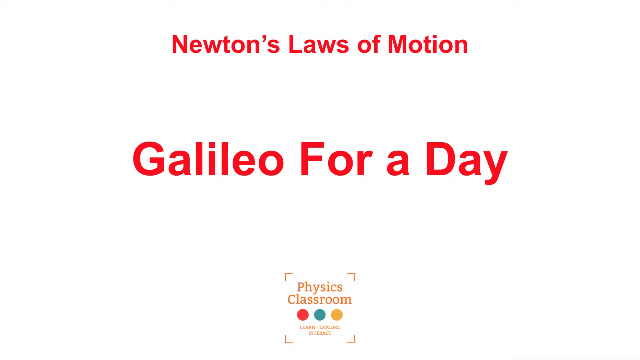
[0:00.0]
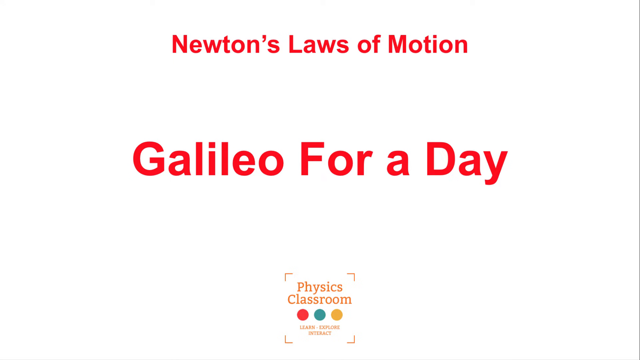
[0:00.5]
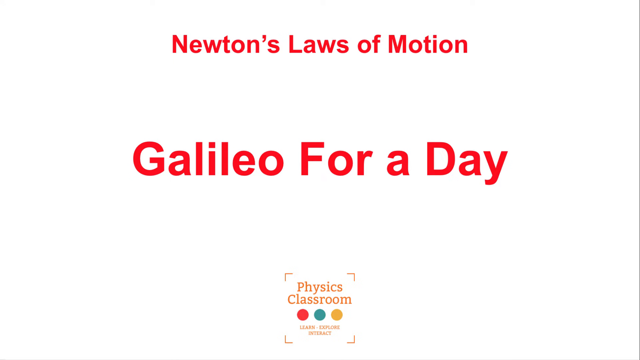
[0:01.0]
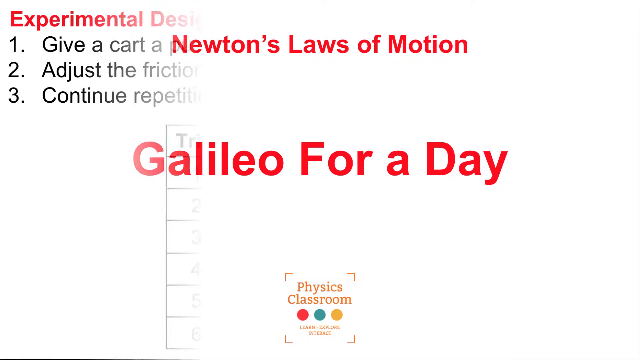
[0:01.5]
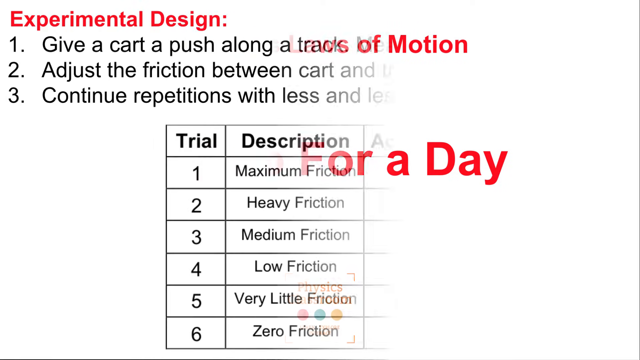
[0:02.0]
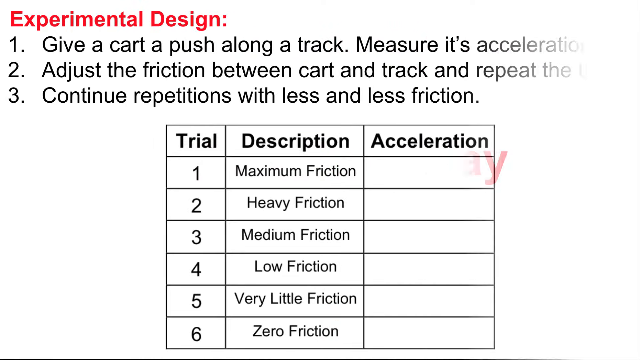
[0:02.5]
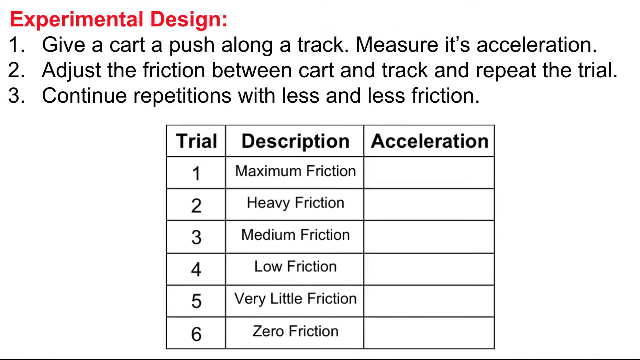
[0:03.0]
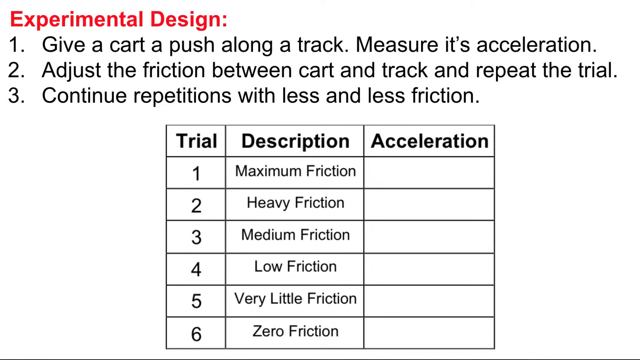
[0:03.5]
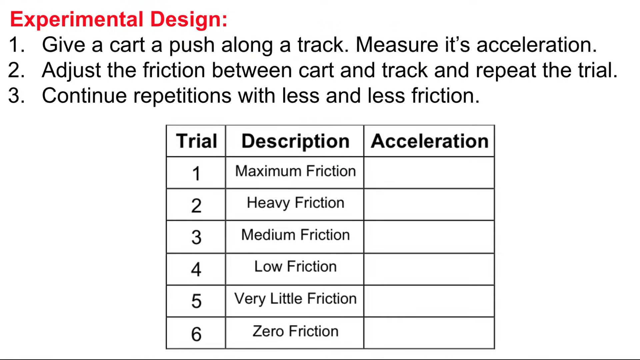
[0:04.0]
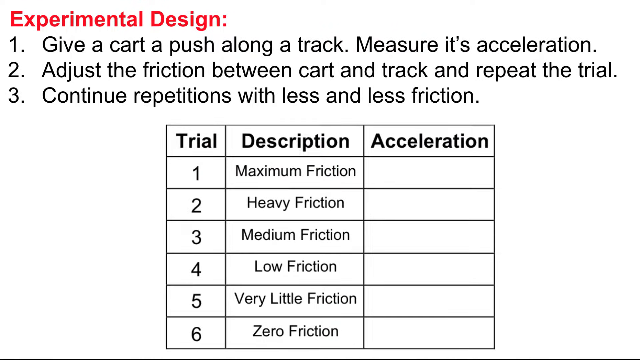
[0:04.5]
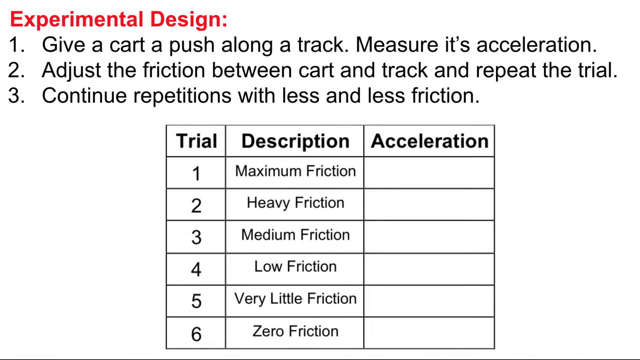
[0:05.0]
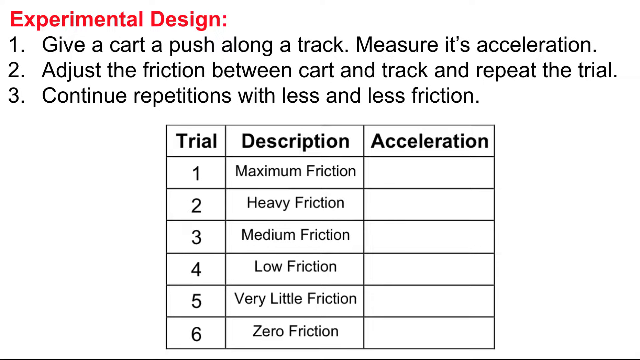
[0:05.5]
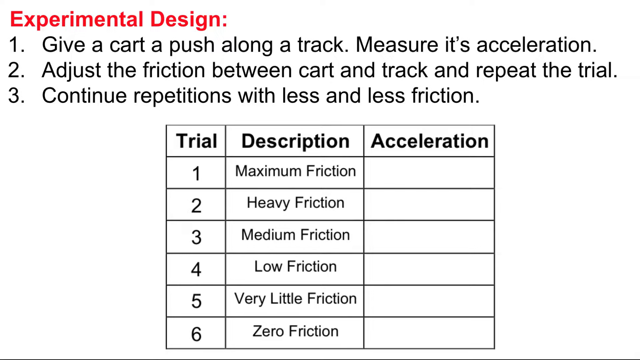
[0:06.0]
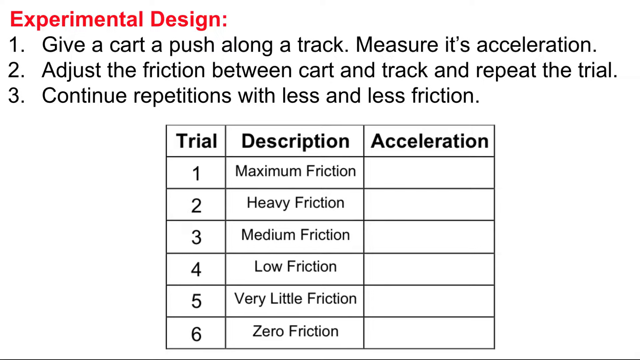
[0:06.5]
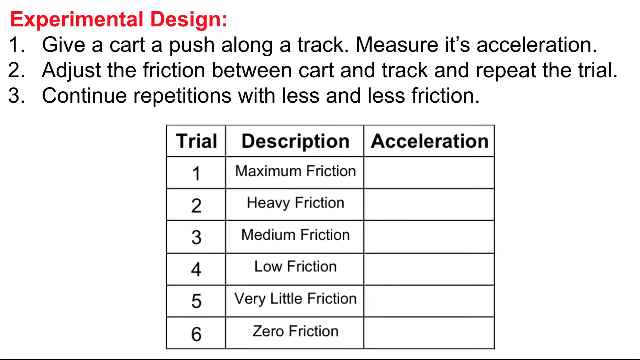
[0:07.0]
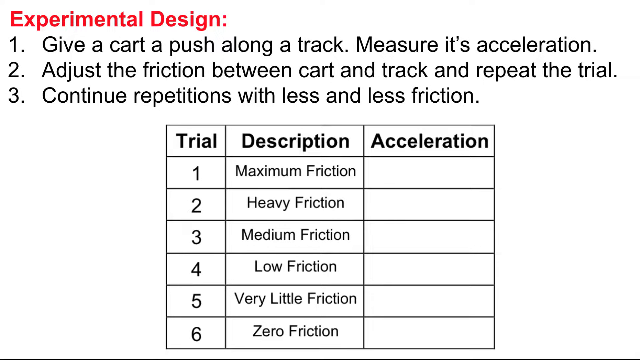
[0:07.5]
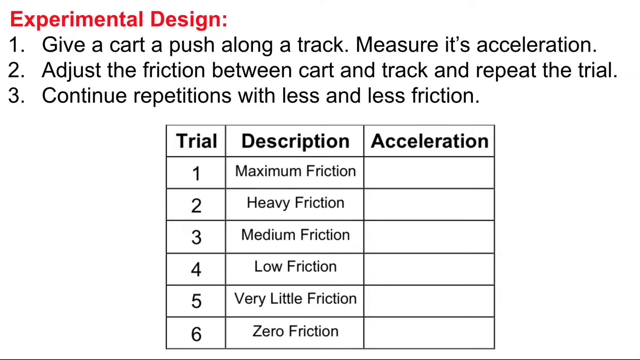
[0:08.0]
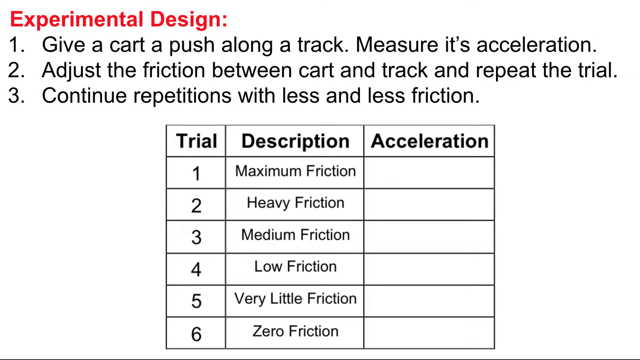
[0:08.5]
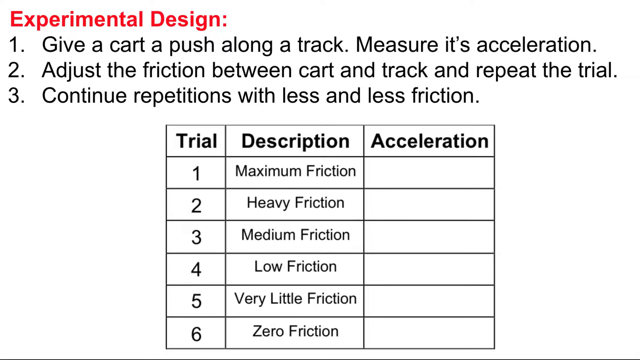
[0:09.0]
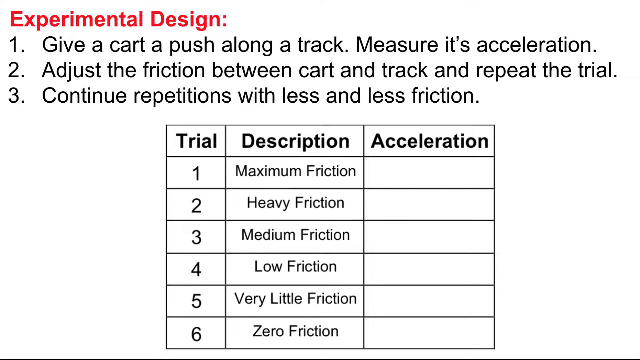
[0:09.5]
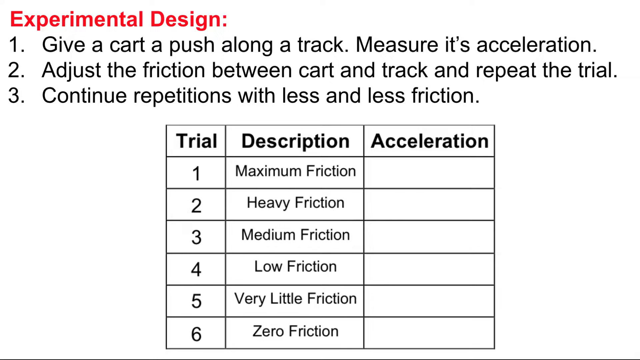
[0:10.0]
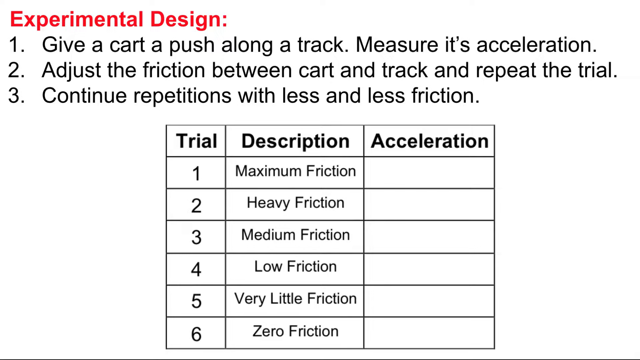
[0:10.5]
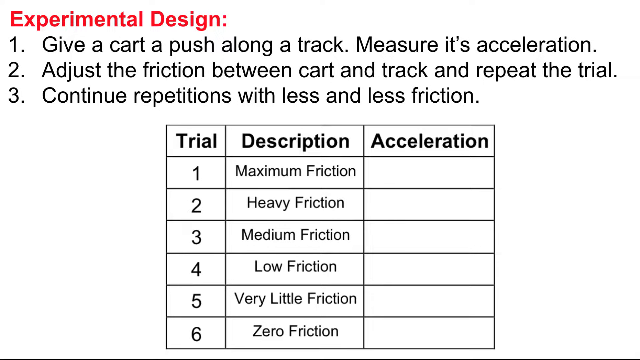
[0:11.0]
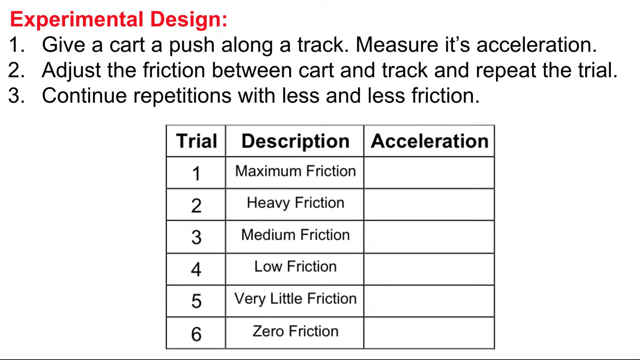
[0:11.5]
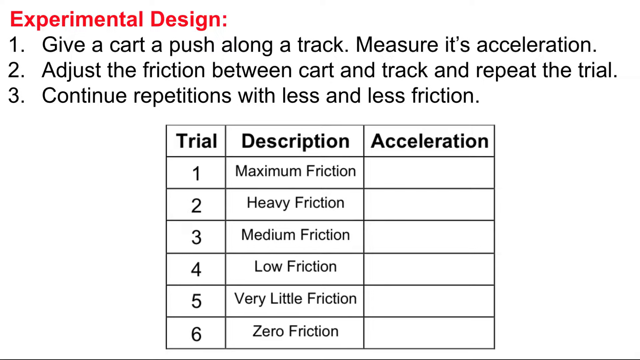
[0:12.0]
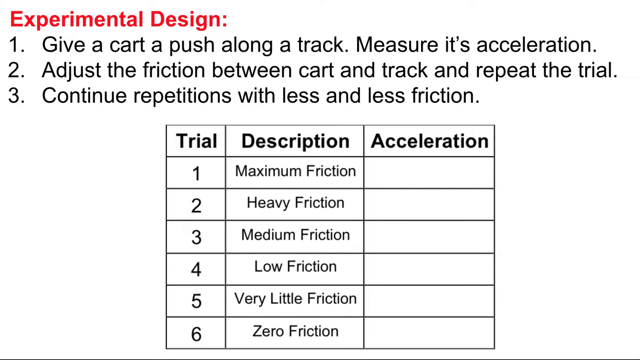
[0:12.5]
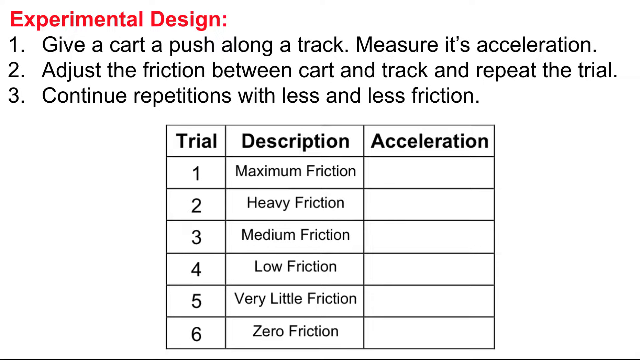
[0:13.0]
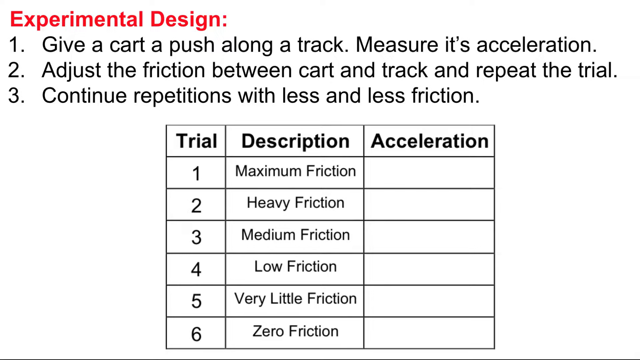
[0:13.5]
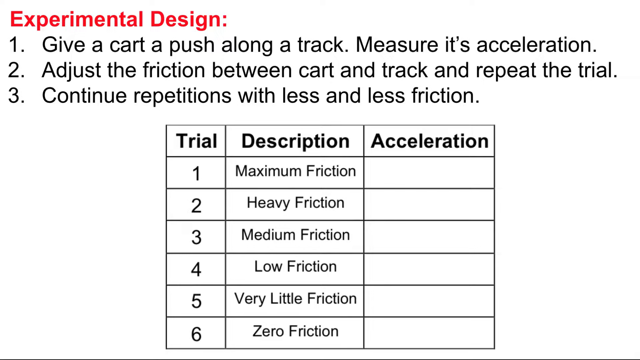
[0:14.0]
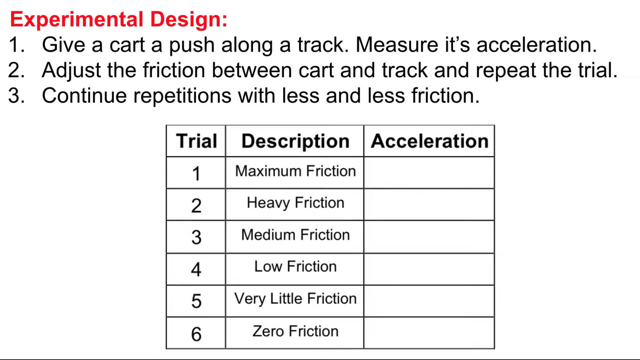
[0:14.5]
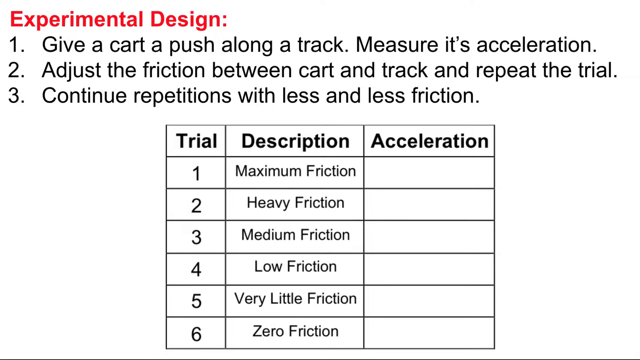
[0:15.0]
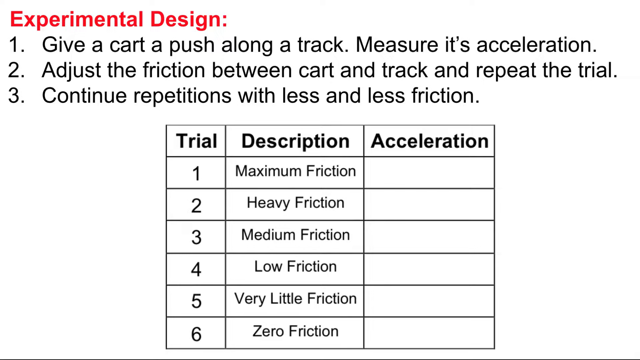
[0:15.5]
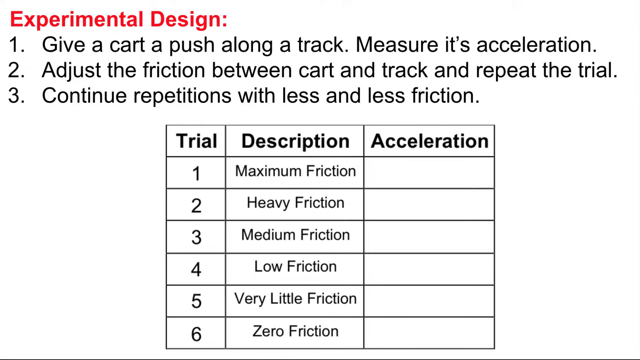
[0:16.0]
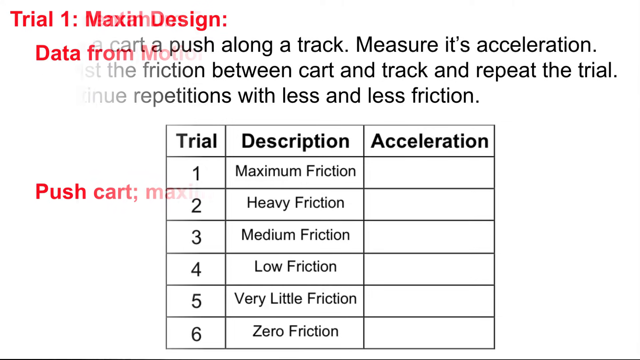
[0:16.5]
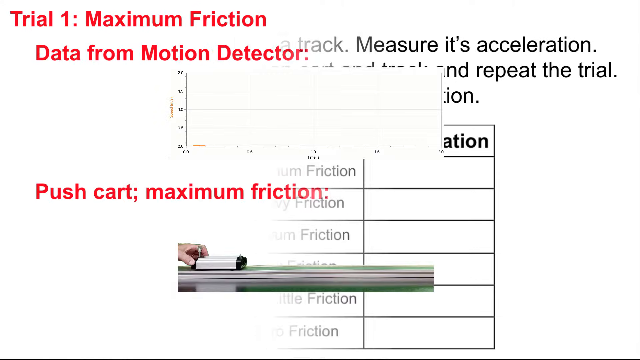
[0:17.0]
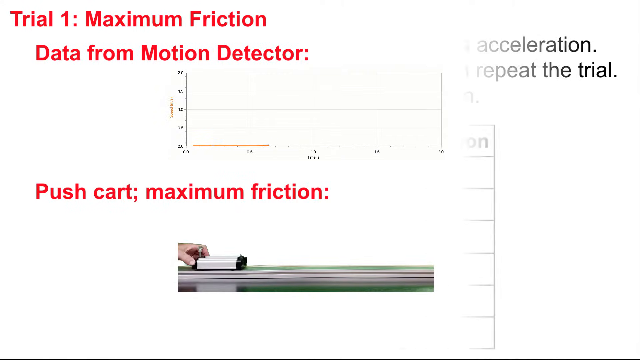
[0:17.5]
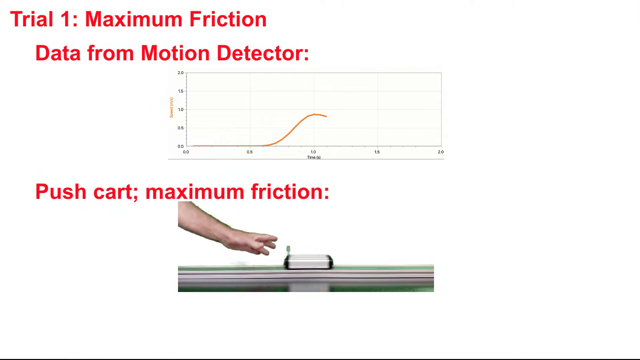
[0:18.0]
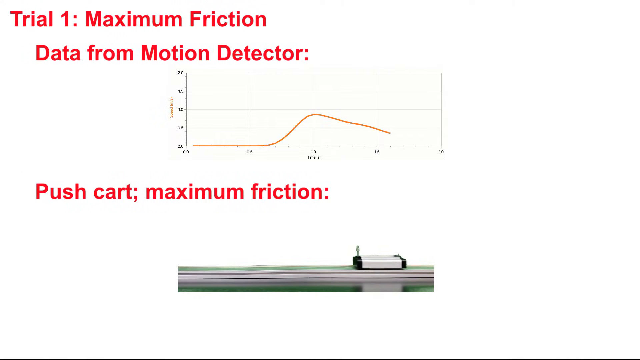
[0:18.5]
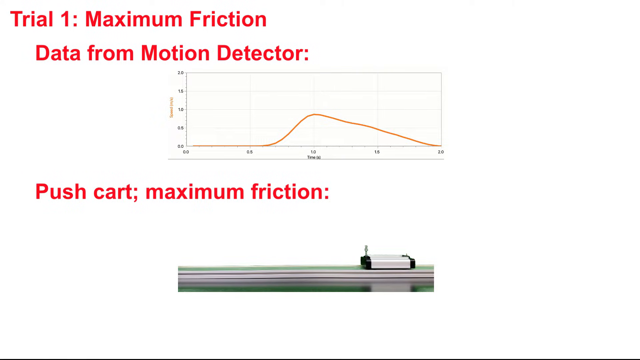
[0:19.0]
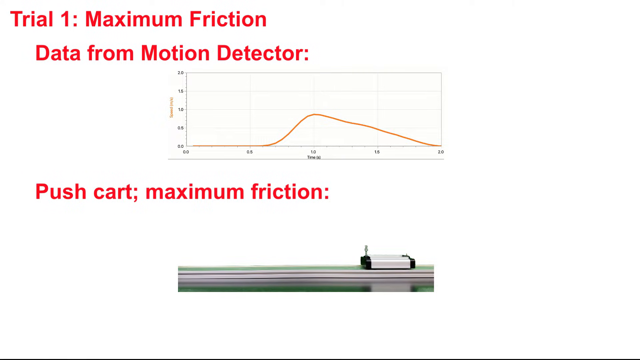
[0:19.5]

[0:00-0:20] The video is a physics lesson on Newton's law of motion, Galileo for a day, covering the laws of motion. On the screen is an experimental design with three steps: first, give each cart a push along the track and measure its acceleration; second, adjust the friction between the carts and the track and repeat the trial; third, continue the repetitions with less and less friction. Below this is a table with the headings trial, description and acceleration. The trials are numbered 1 to 6, with the descriptions maximum friction for trial 1, heavy friction for trial 2, medium friction for trial 3, low friction for trial 4, very little friction for trial 5 and zero friction for trial 6. The acceleration column has no values filled in.